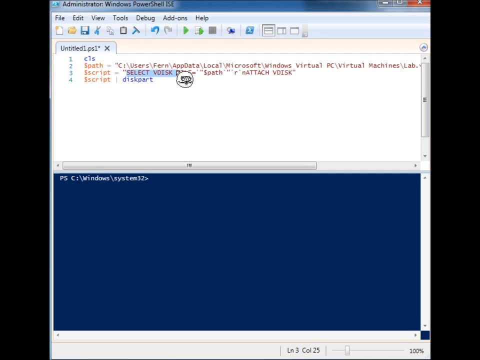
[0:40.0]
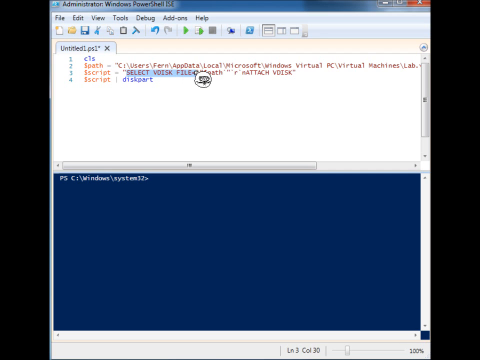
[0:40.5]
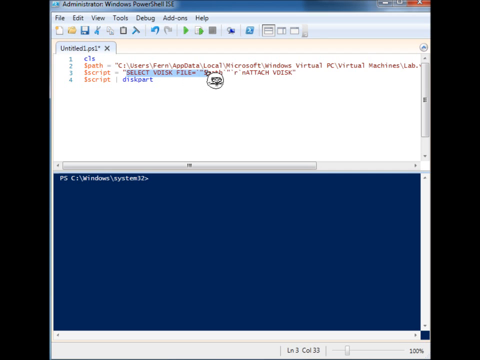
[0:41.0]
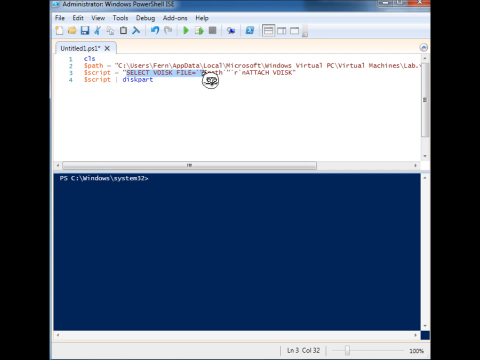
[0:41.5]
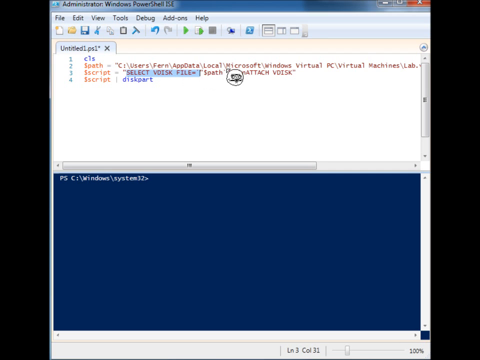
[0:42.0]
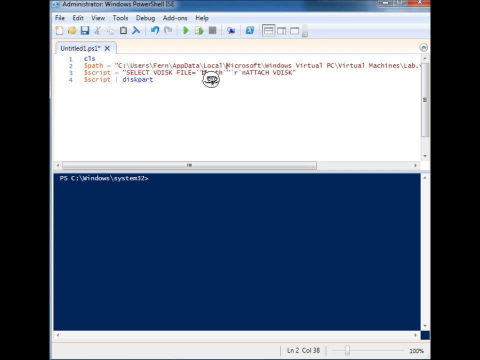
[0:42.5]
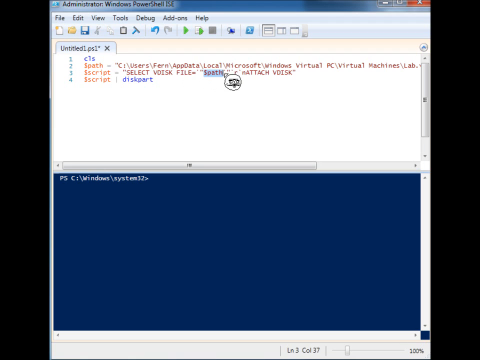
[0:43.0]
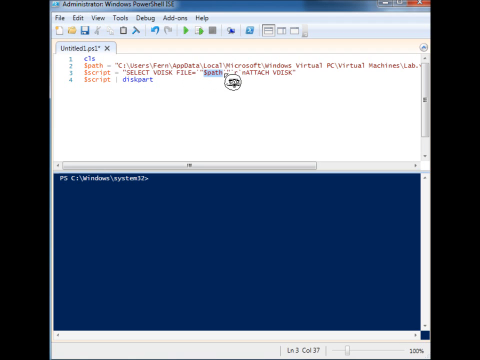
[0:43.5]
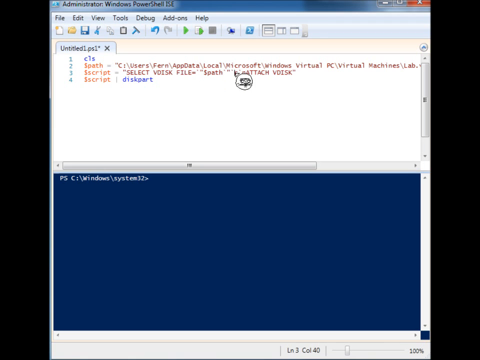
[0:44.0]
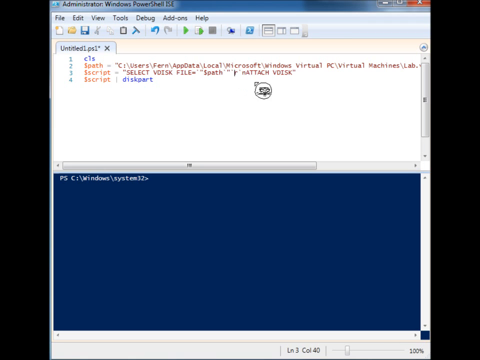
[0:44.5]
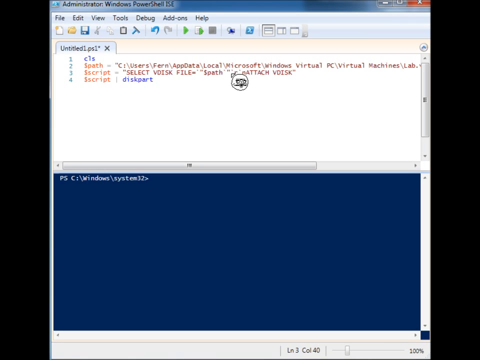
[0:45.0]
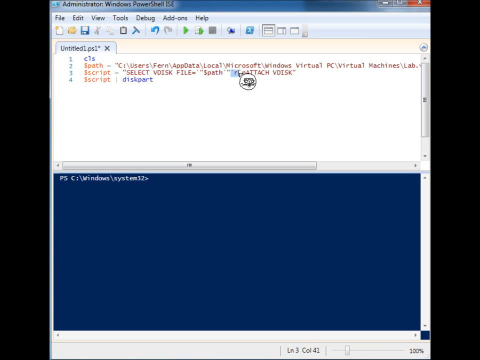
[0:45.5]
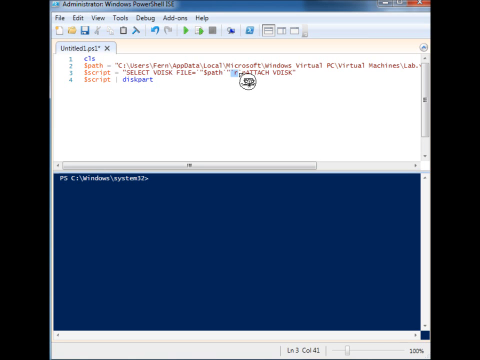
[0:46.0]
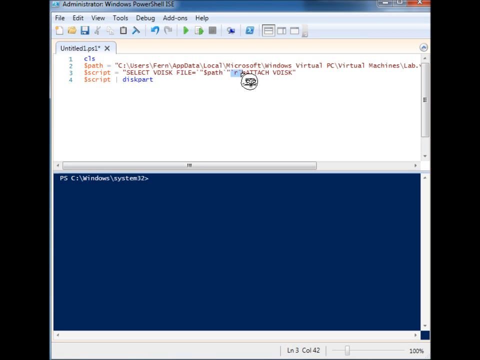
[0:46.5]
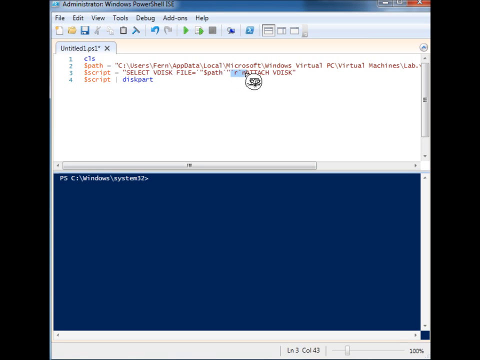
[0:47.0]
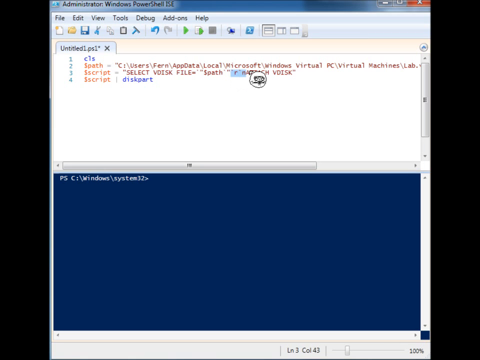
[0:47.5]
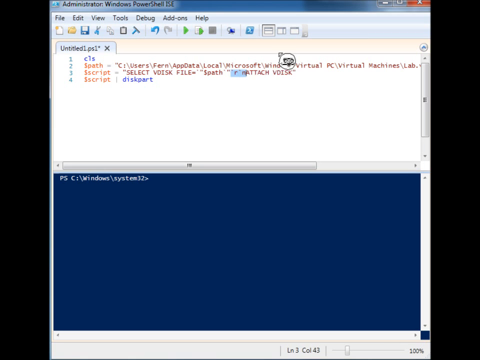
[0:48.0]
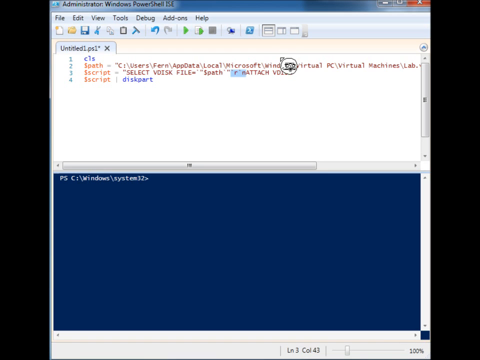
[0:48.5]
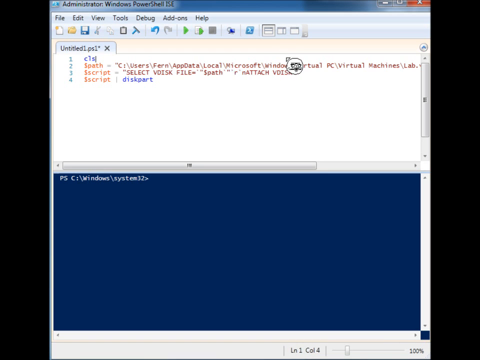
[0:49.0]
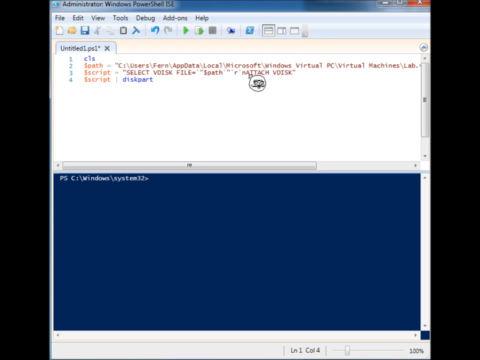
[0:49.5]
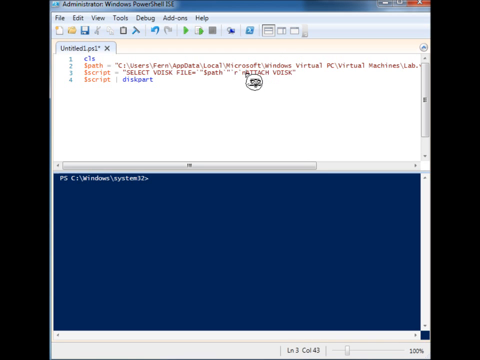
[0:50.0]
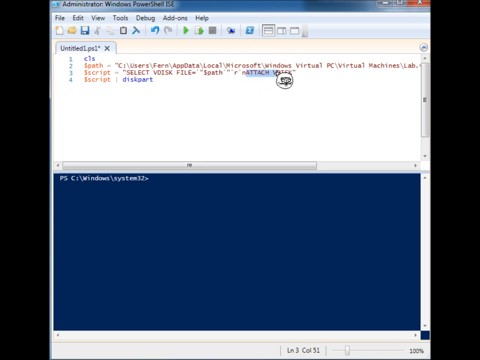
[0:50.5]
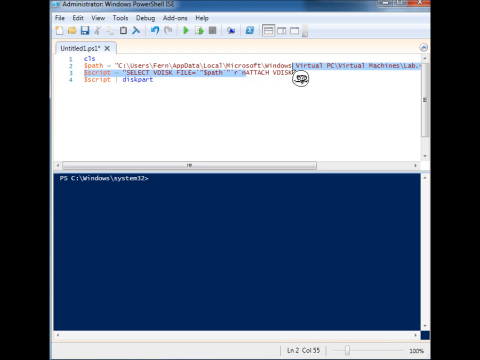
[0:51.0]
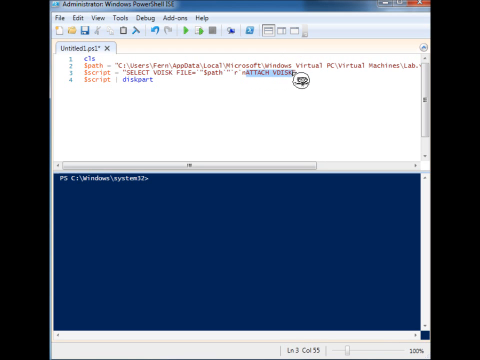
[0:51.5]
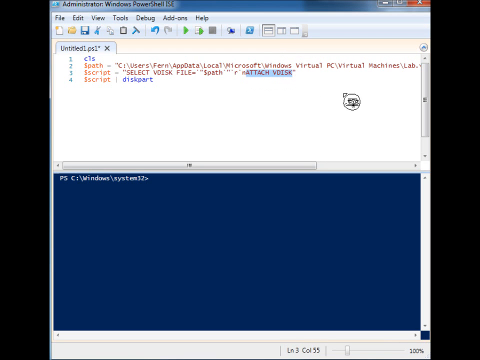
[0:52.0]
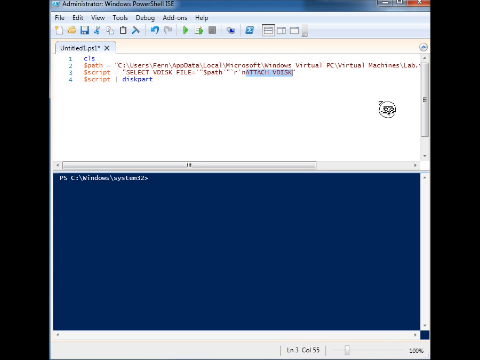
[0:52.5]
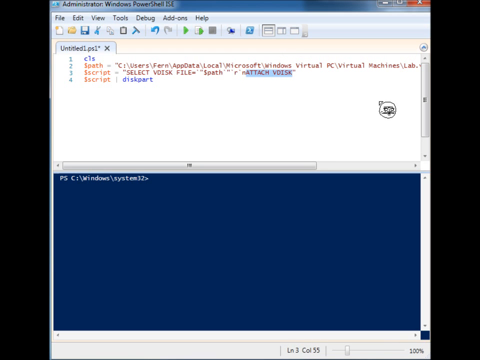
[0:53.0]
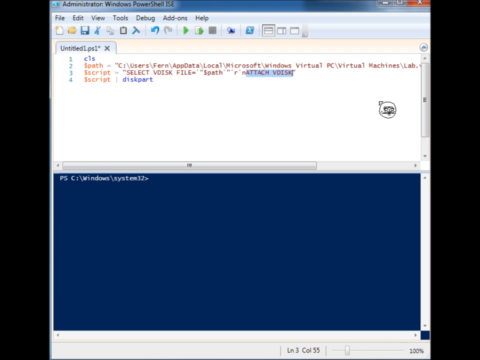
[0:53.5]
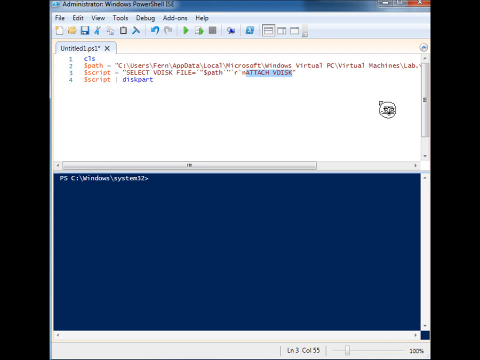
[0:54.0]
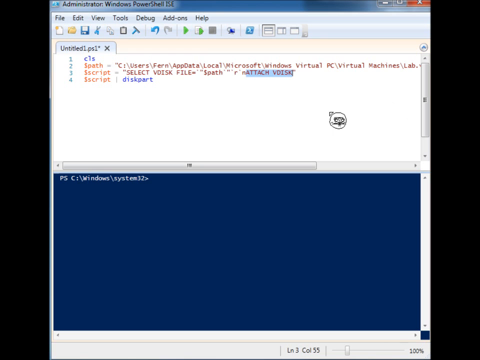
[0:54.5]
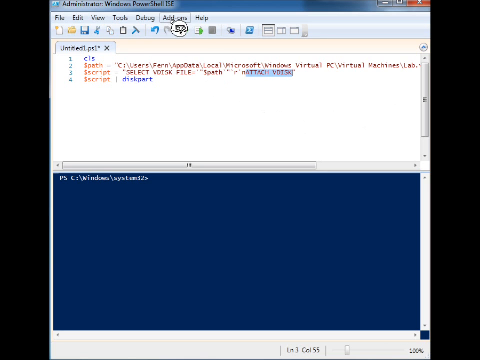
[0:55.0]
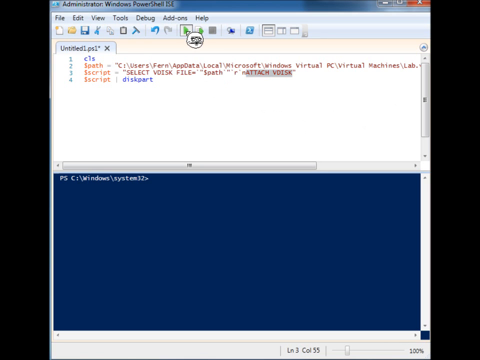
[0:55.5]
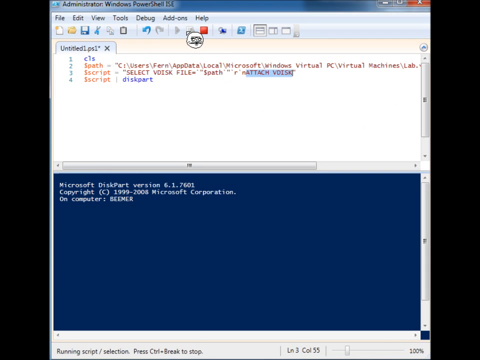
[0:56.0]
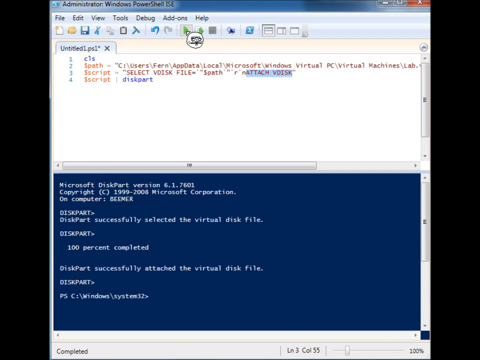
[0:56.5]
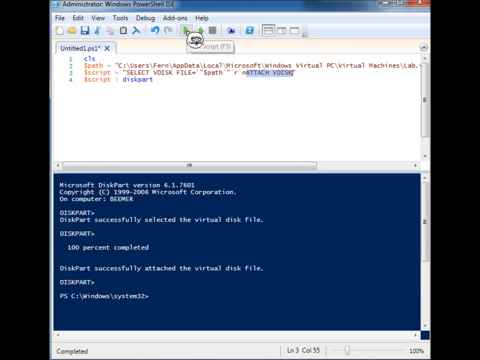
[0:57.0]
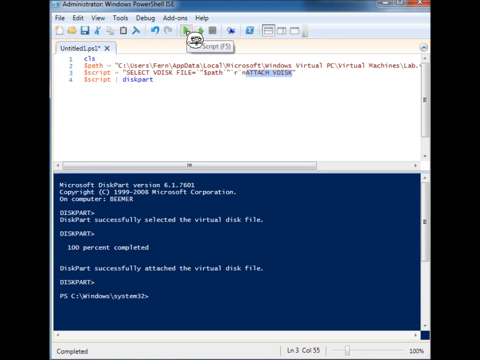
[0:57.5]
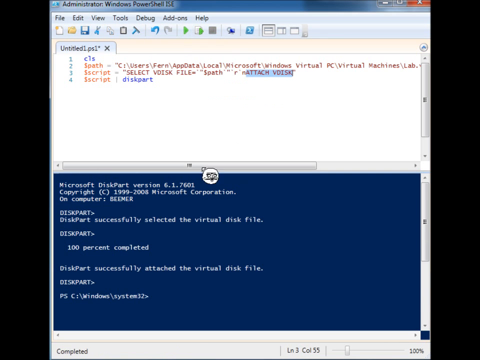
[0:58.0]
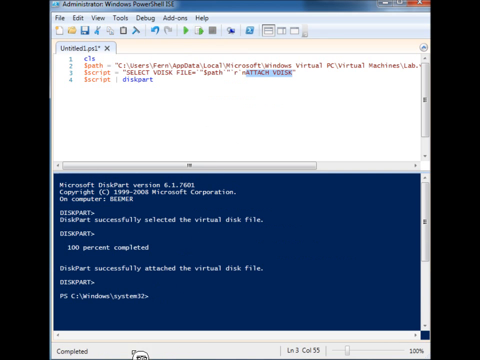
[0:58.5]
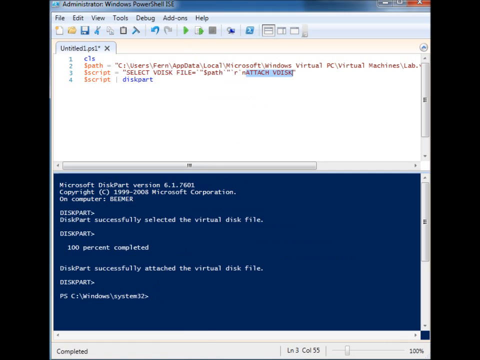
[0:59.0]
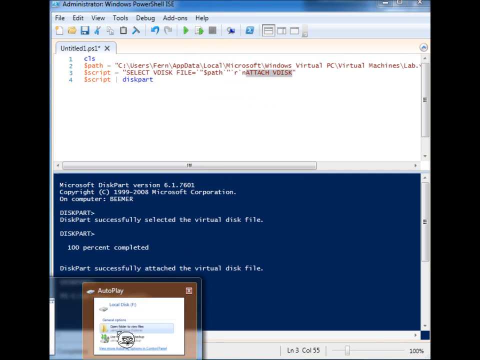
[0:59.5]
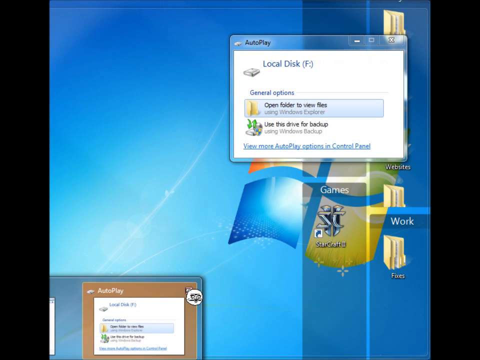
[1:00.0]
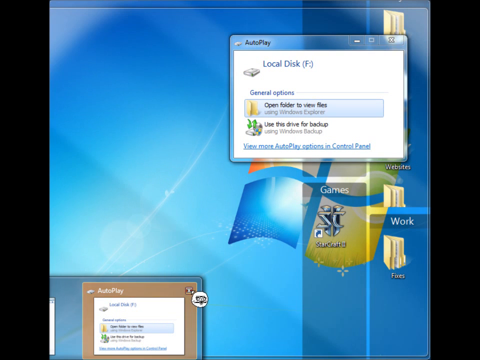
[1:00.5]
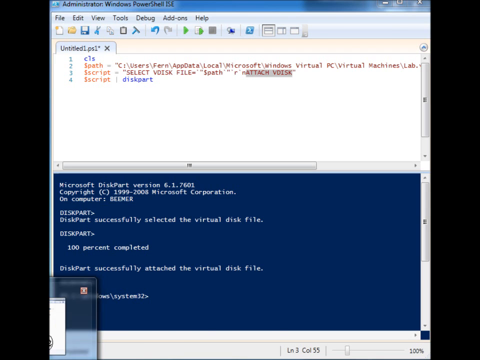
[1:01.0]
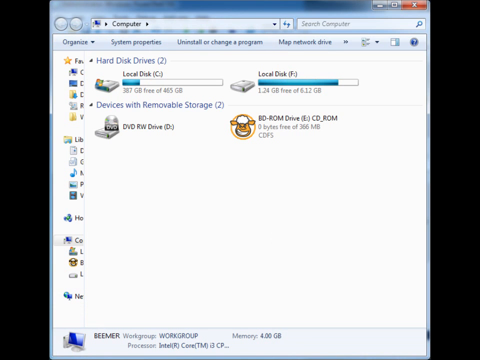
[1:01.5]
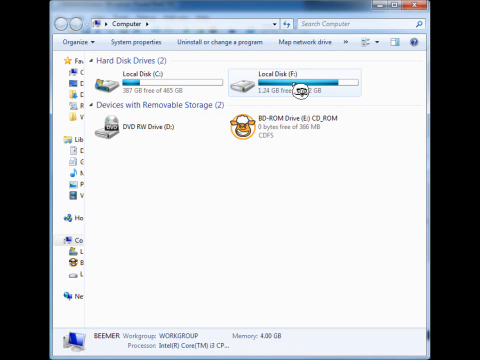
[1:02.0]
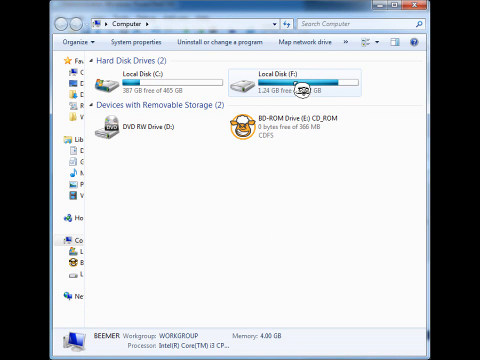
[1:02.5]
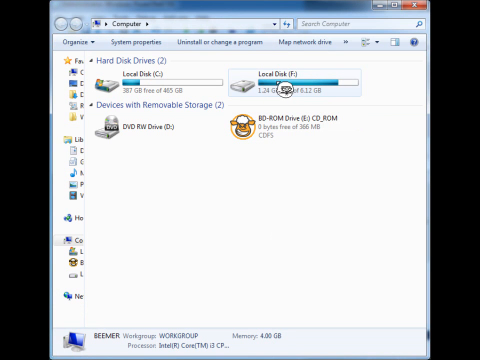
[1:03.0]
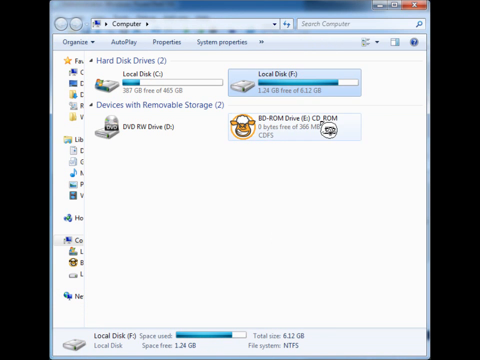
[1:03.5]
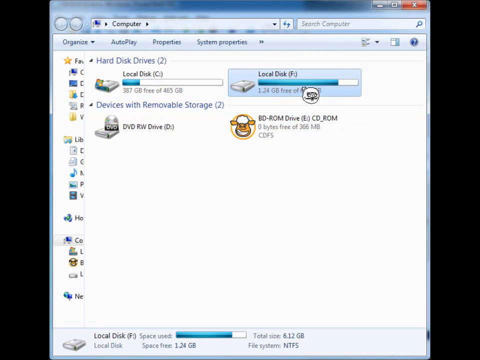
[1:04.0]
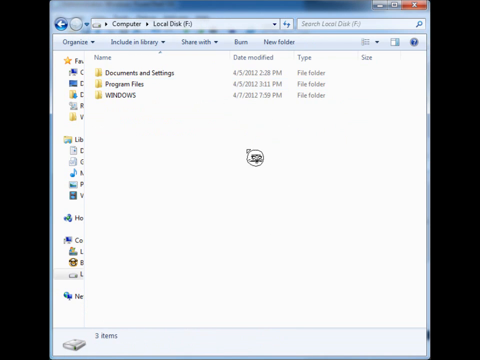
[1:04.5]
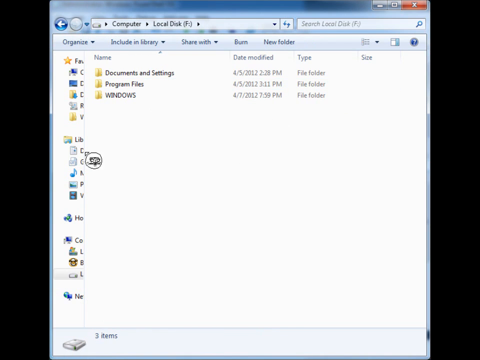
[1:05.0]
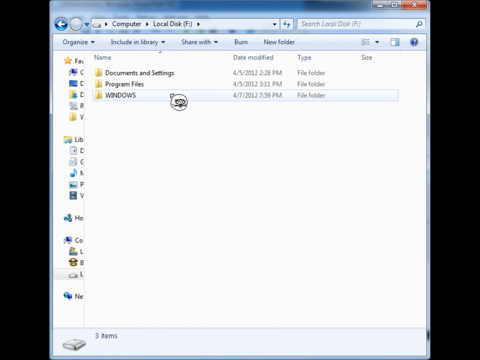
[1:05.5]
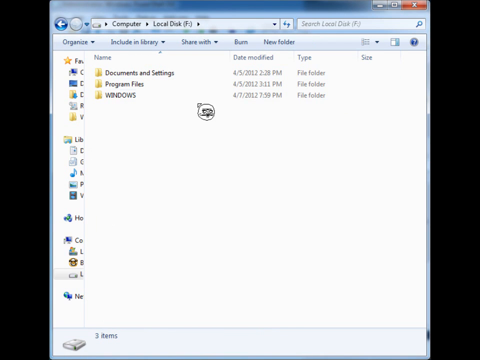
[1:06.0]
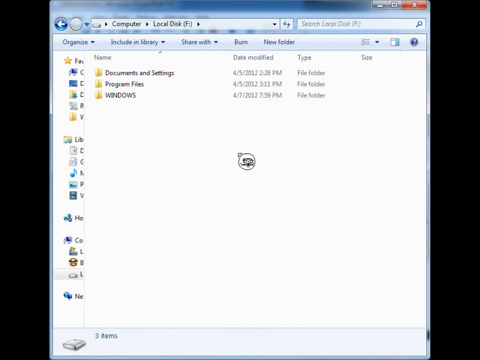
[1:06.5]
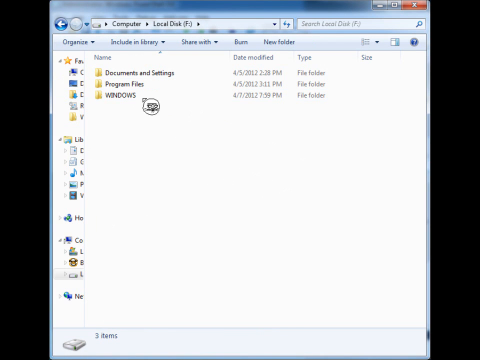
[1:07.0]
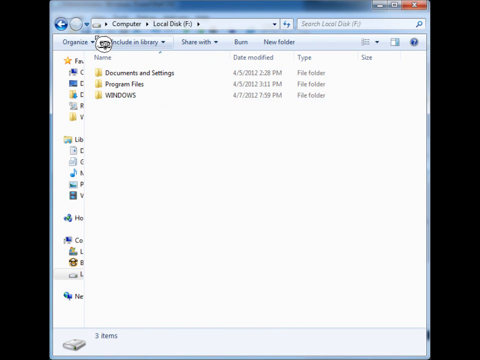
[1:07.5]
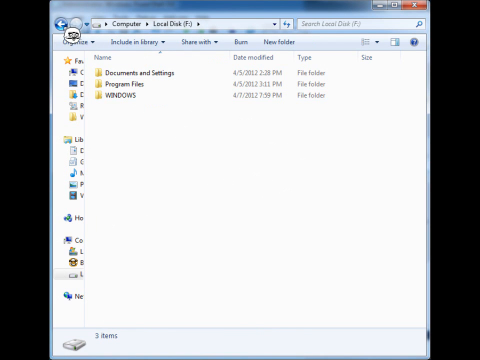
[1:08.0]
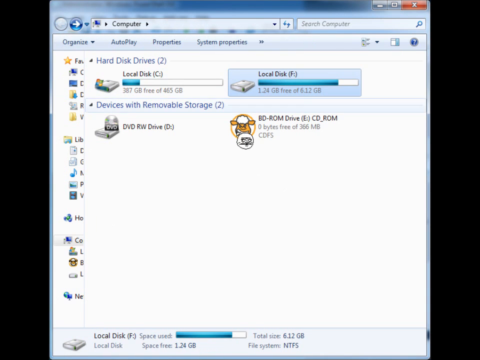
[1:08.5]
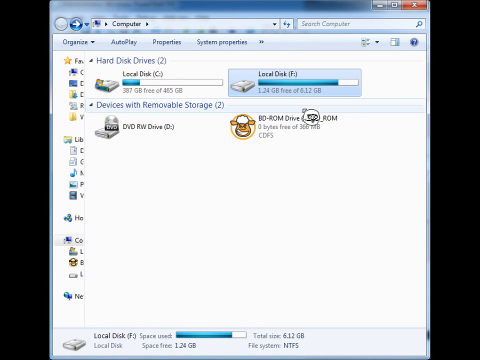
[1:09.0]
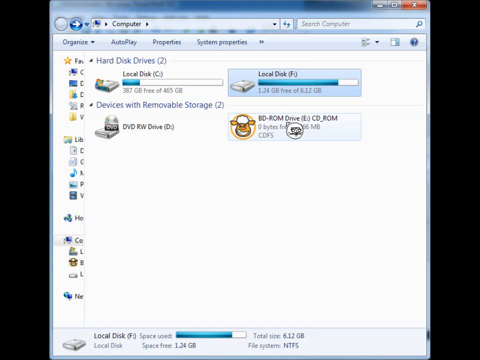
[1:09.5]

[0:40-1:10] The screen still shows the administrator Windows PowerShell window. The cursor goes over and selects various elements of the script, particularly in line three: file, path, the letter R in quotes, which may stand for read, and then attach vdisk. Along the top of the window is a row of icons, from left to right: a new file icon, a folder icon, a disk icon, a cut icon, a copy icon, a clipboard paste icon, possibly another icon, a blue curving arrow for undo, a grayed-out arrow curving the other direction for redo, a green triangular play button, another play button on top of a white document icon, and some other unidentified icons. After reaching attach vdisk, play is pressed and text appears in the lower half of the window, which resembles a computer terminal, showing that the disk partition is successfully selected and completed 100%. The view then switches to a window of the local disk with various folders: documents and settings, program files, and the Windows folder. The cursor moves to the back button to return to the screen showing the storage devices connected to the computer: the local disk C drive, the F drive, and removable storage including the DVD read/write disk and the BD-ROM drive.